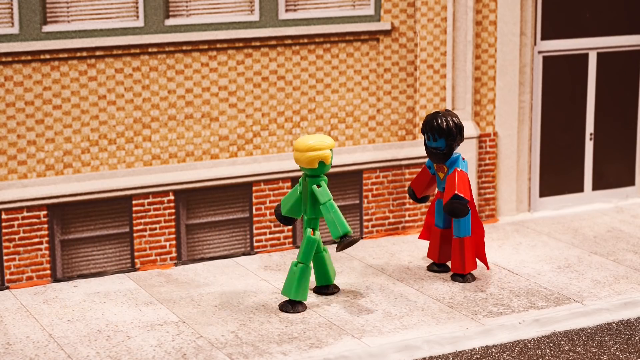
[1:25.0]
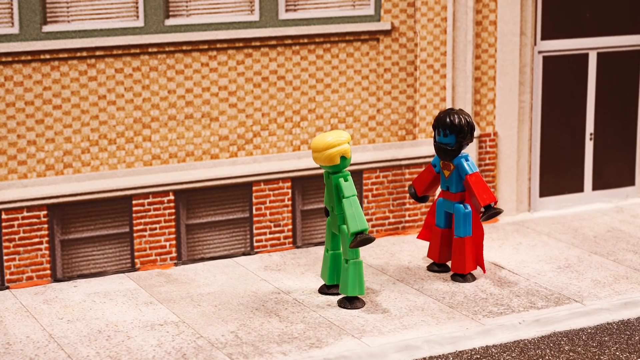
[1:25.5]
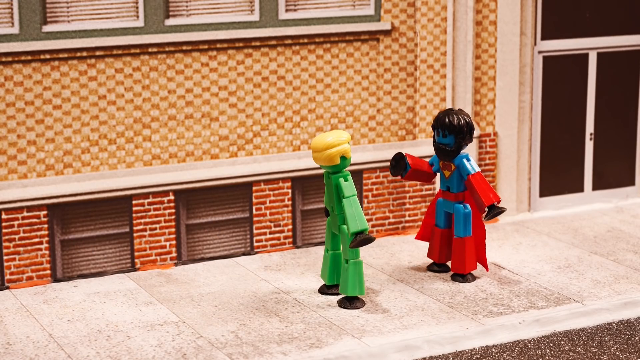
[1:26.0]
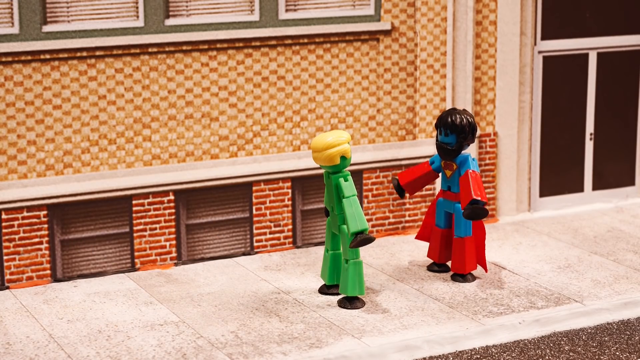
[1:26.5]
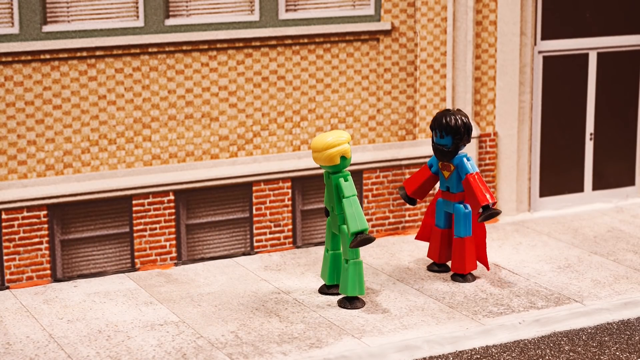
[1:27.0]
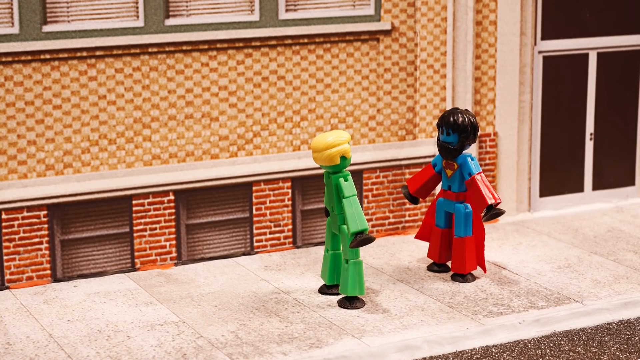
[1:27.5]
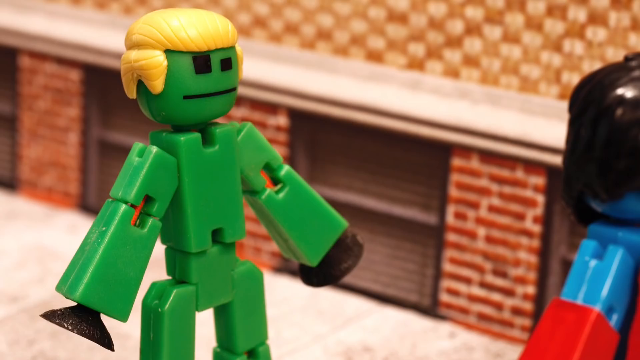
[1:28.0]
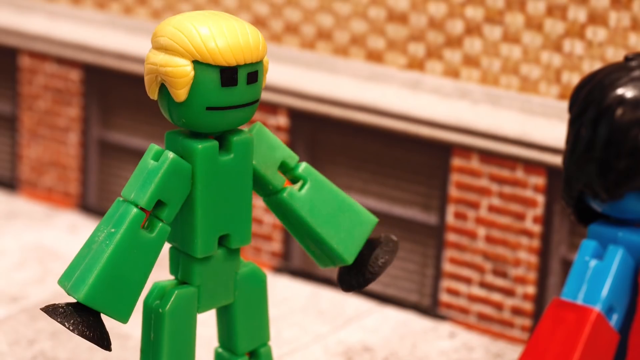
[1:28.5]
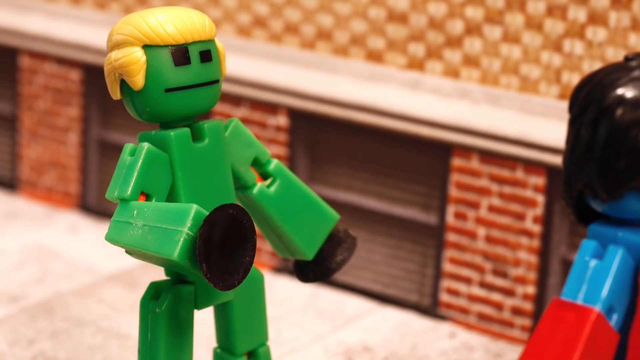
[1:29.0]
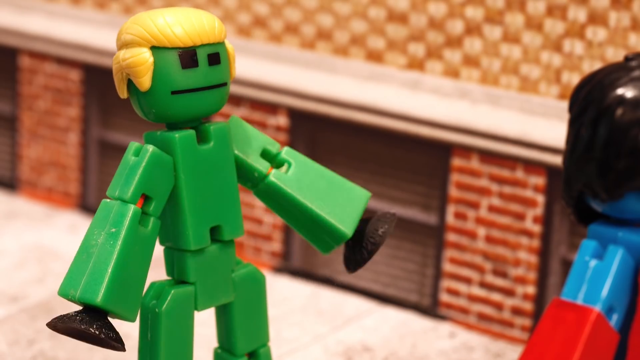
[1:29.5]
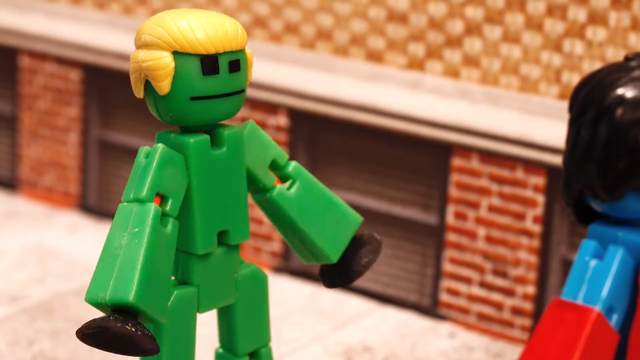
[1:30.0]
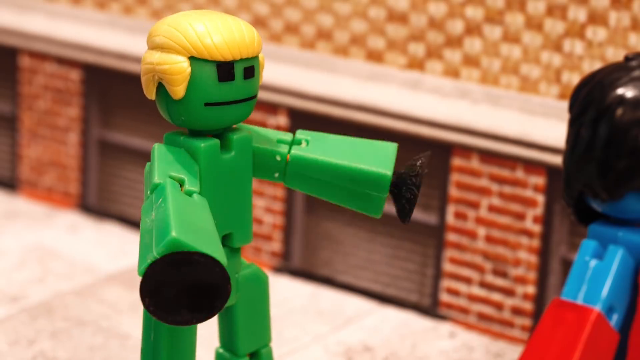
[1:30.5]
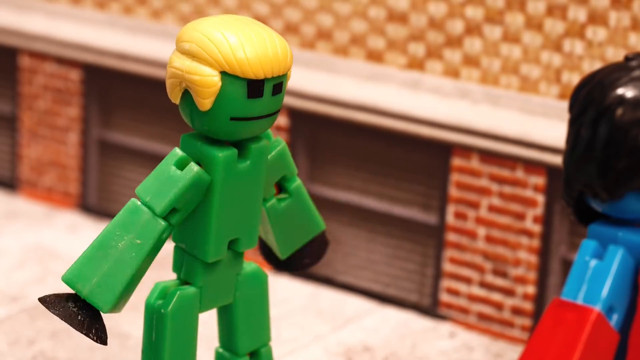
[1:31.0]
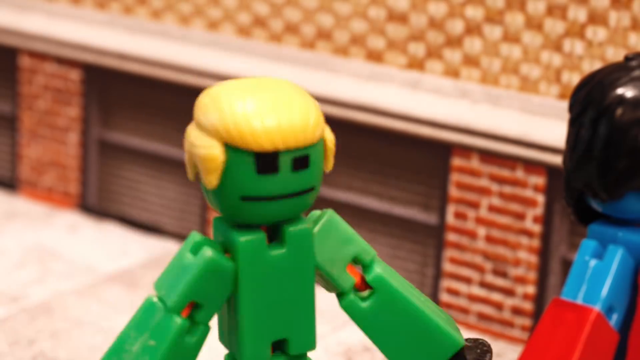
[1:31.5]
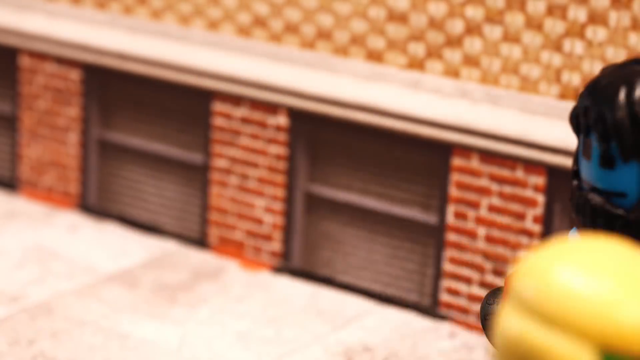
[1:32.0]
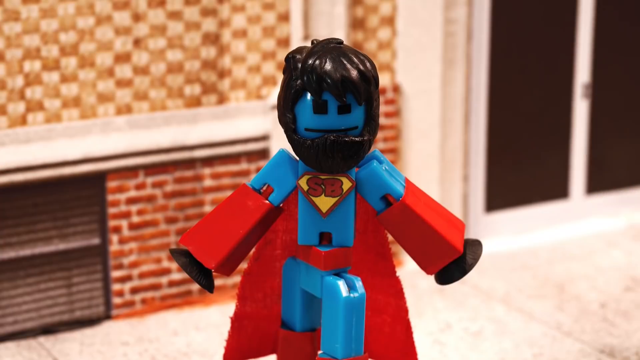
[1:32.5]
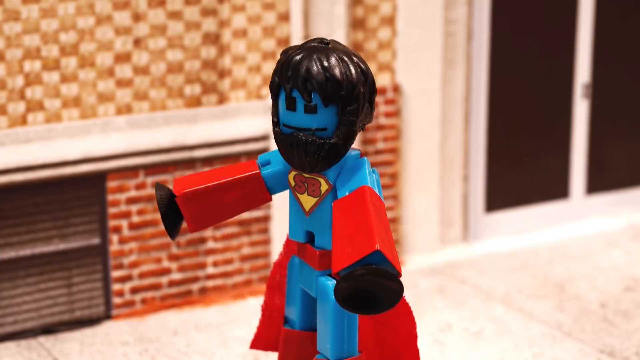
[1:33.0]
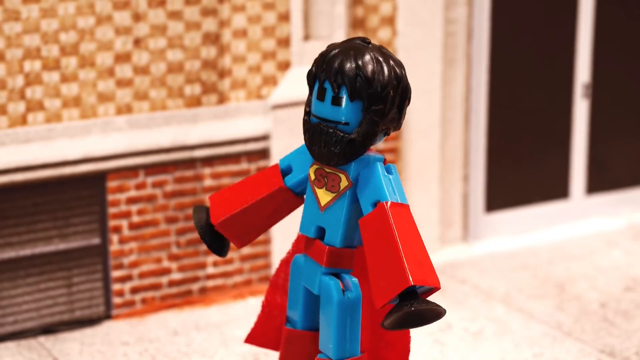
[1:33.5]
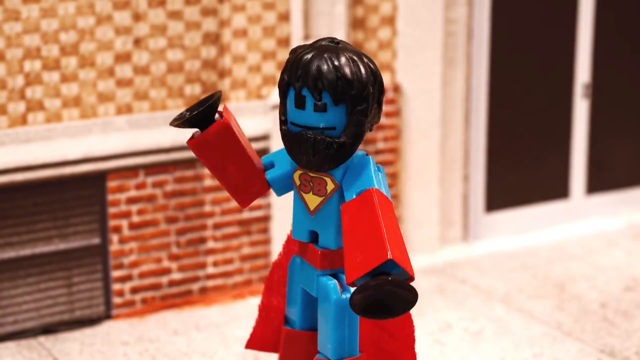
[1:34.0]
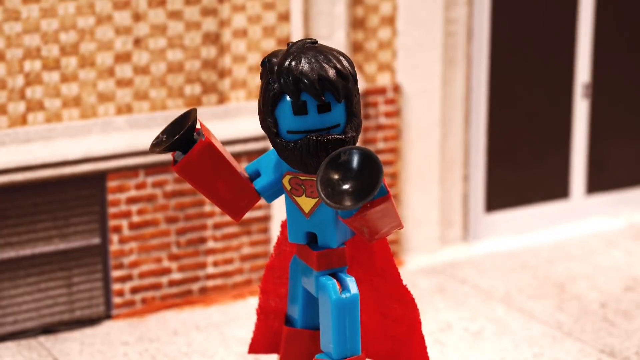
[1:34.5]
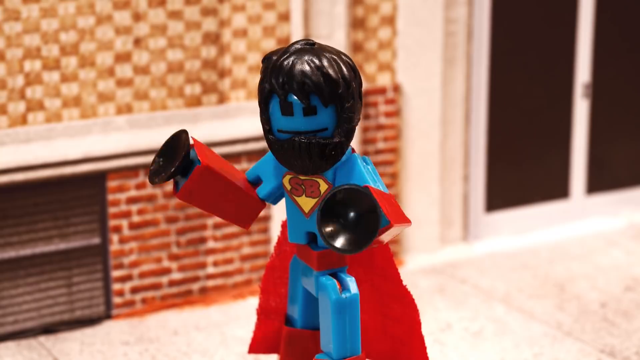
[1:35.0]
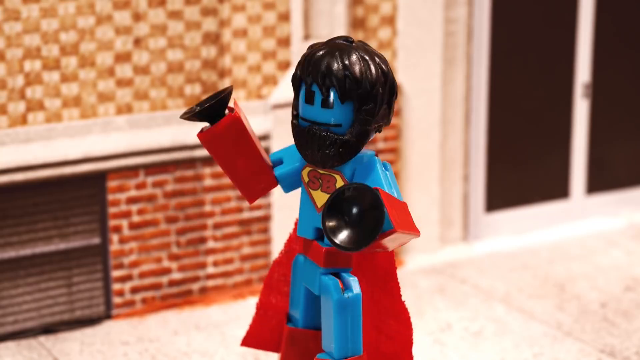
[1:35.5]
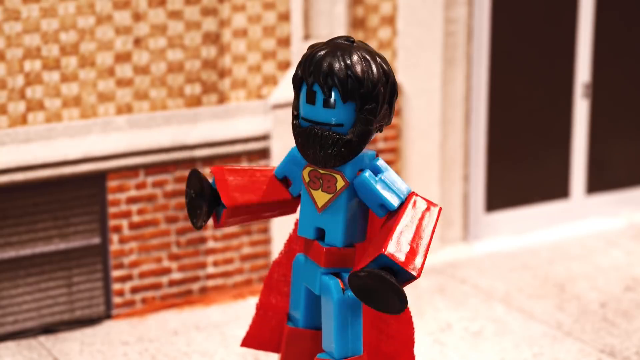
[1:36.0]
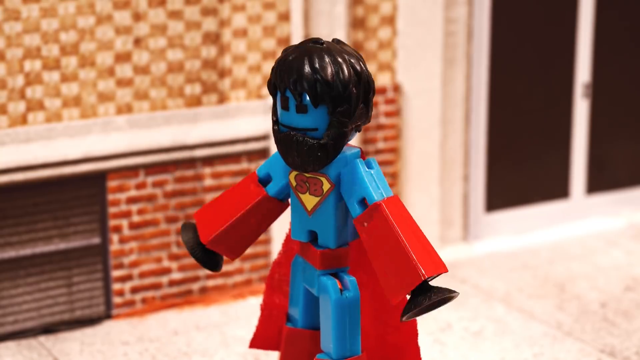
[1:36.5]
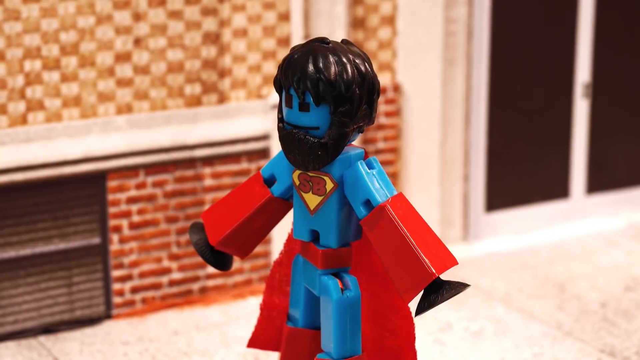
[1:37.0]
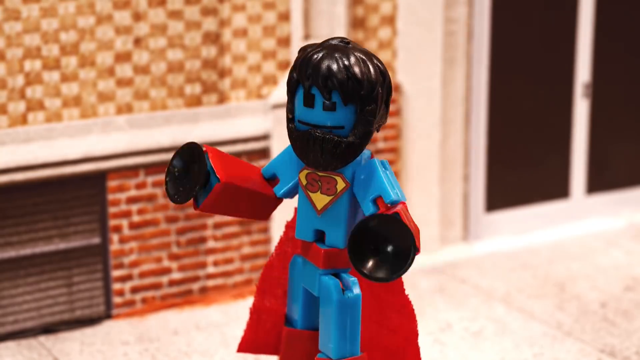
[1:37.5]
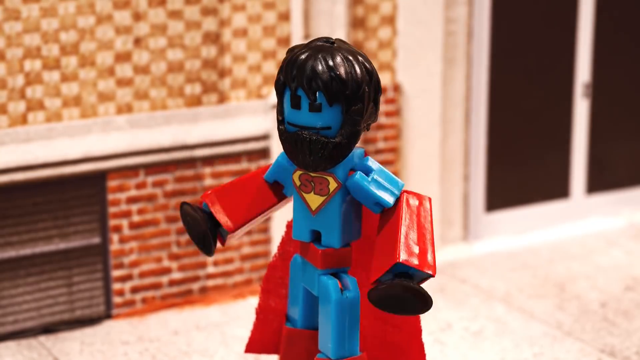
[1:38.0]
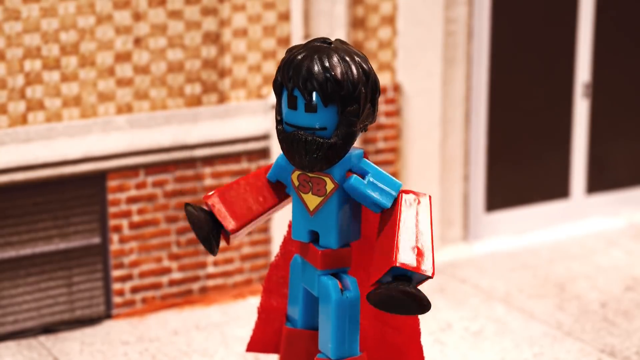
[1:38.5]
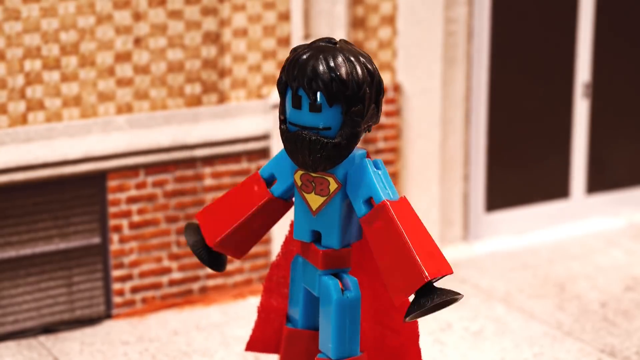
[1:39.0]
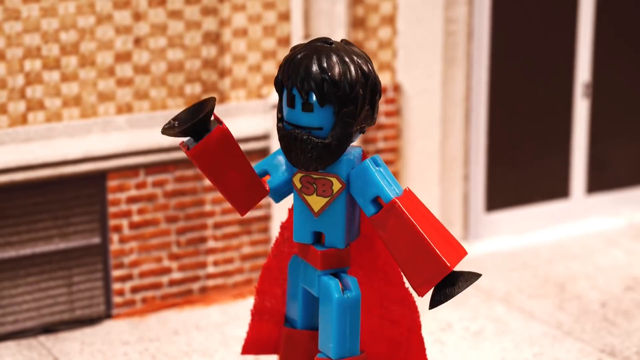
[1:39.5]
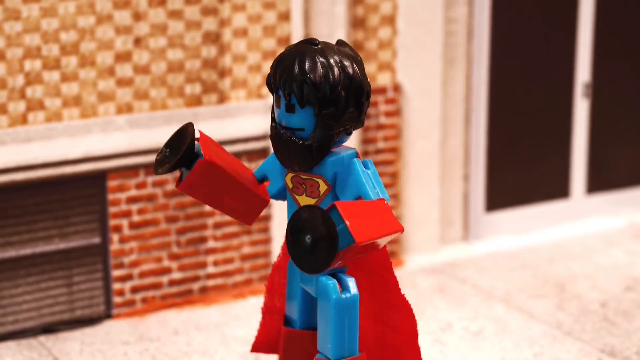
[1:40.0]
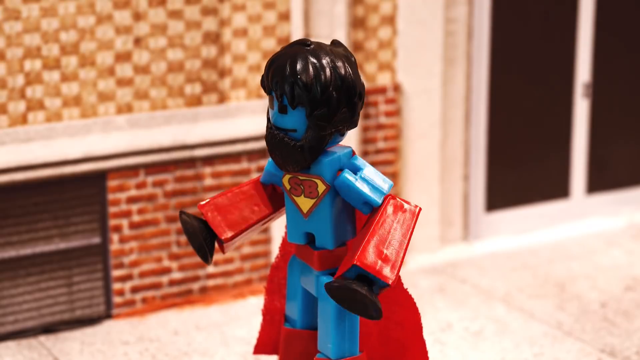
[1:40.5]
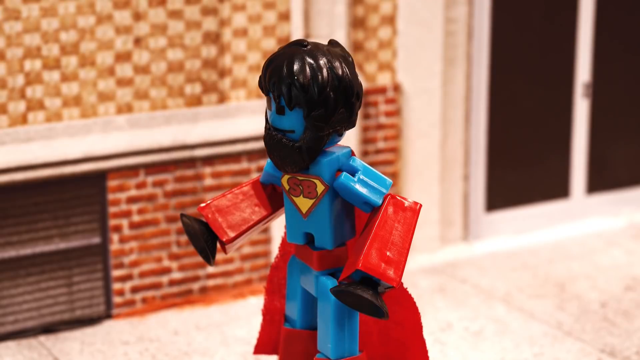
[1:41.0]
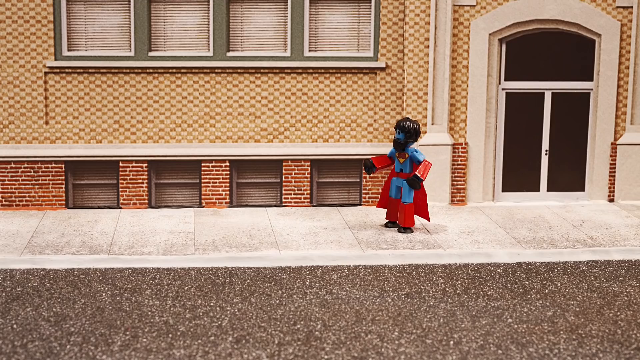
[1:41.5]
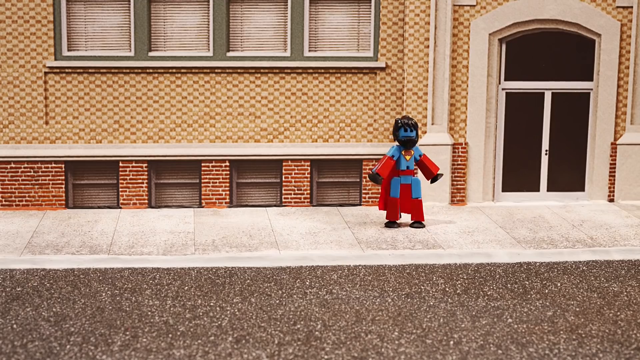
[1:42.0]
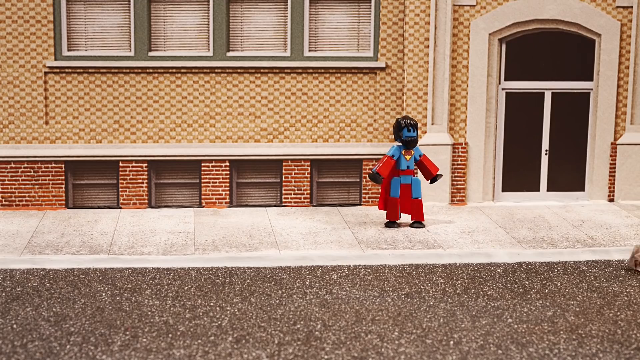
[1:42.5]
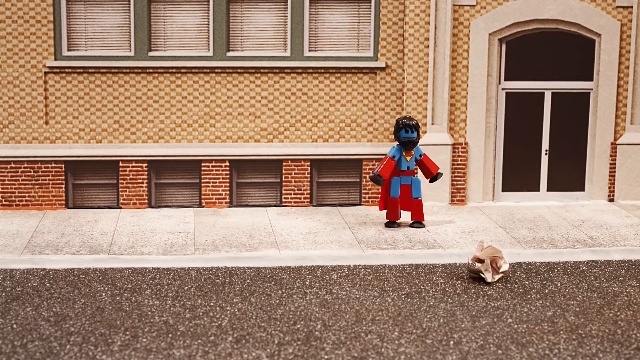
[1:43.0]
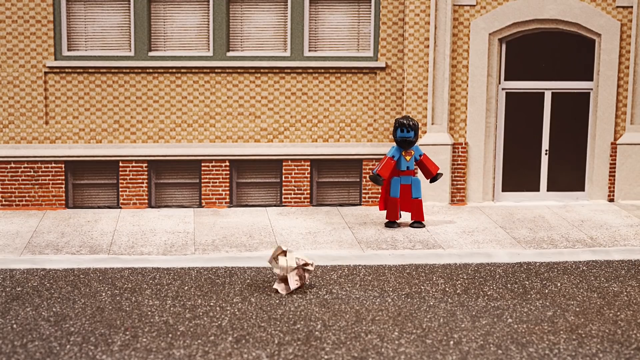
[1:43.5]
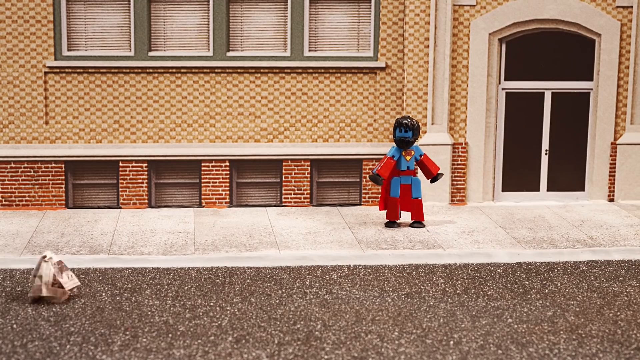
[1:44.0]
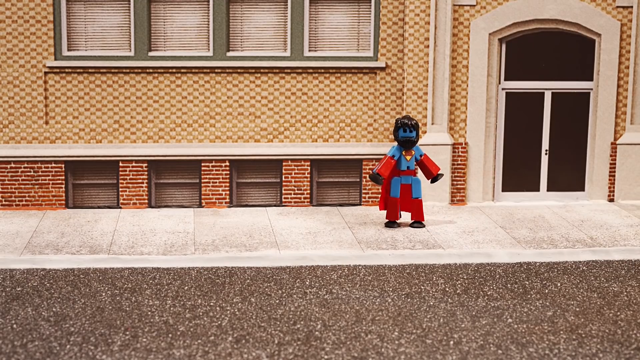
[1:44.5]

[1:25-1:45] On a city sidewalk next to a building, a Superman-like figurine is standing, and a green figurine approaches him. The green figurine has blonde hair, and the Superman figurine has shaggy black hair and a beard, a red cape, and a blue costume except for its red forearms and calves. The two begin talking very briefly, and the green figurine walks off. The Superman figurine looks at its hands and gestures around, seemingly talking to himself. The camera zooms out to show the whole sidewalk. The Superman figure turns to face the road and watches a paper tumbleweed run across it.